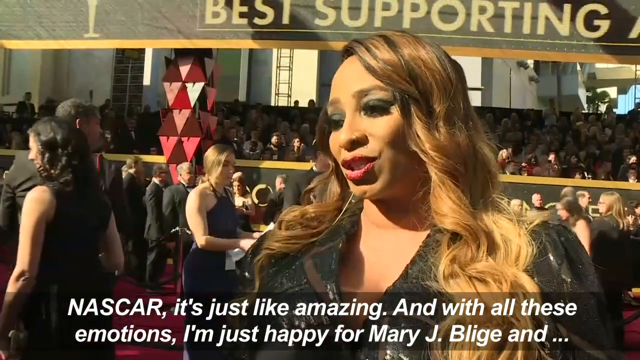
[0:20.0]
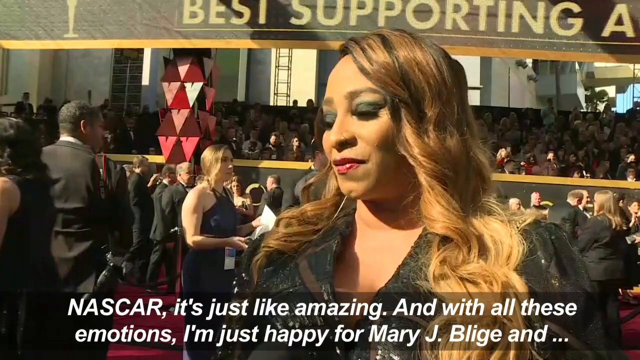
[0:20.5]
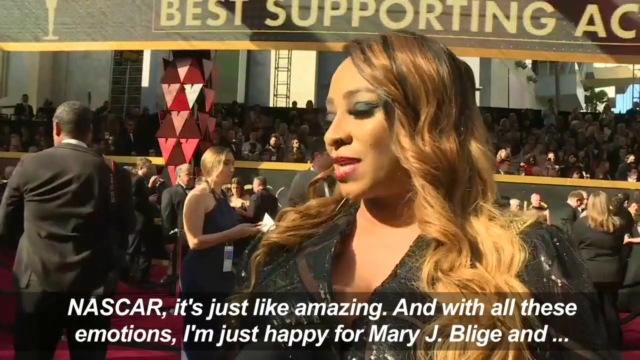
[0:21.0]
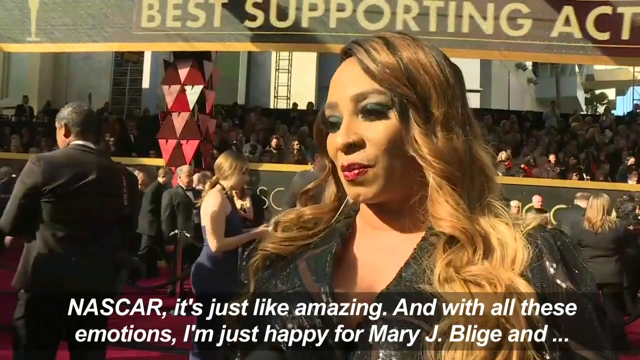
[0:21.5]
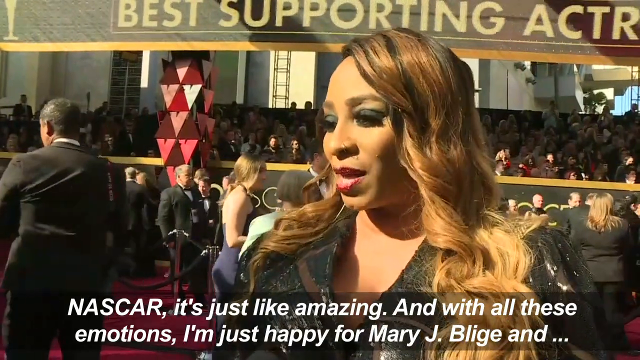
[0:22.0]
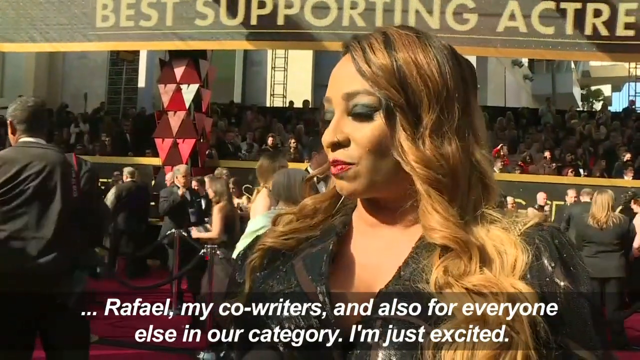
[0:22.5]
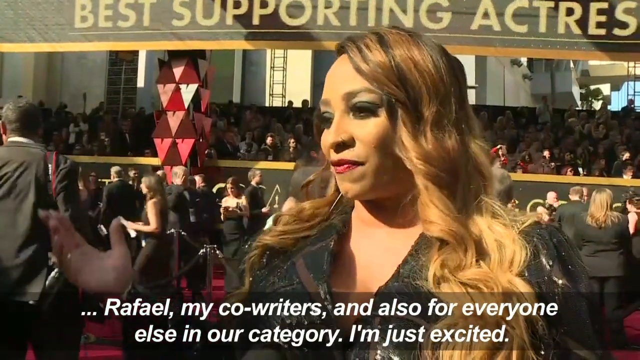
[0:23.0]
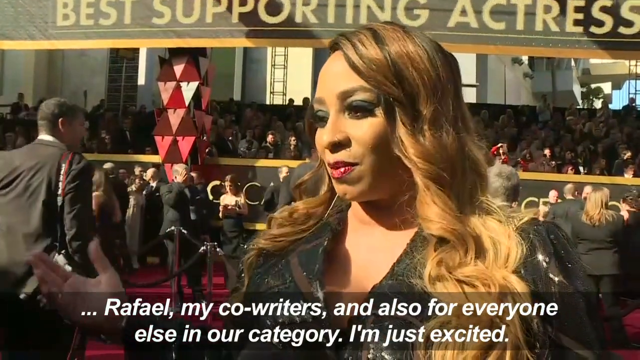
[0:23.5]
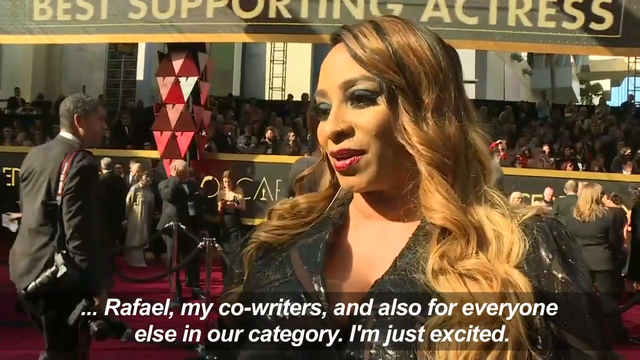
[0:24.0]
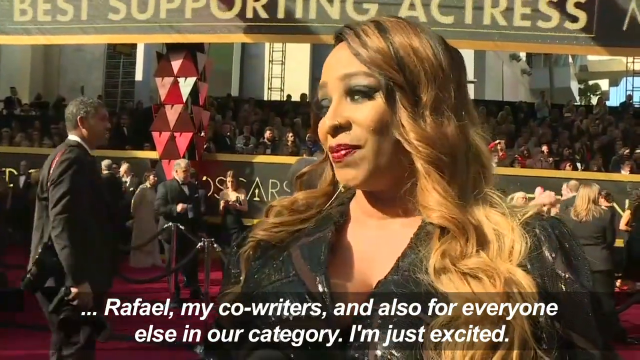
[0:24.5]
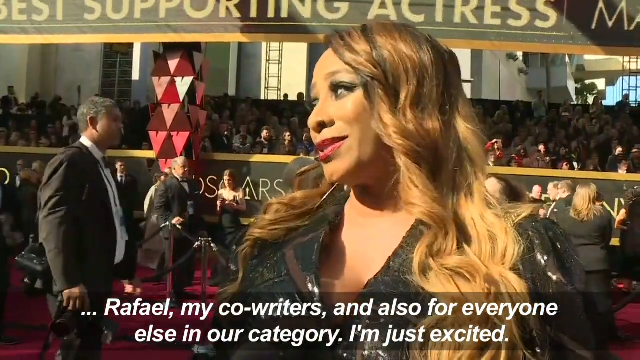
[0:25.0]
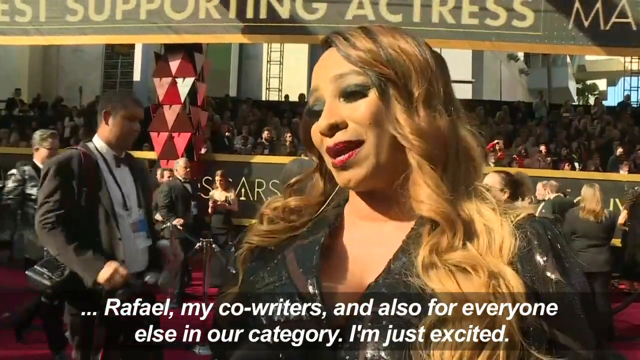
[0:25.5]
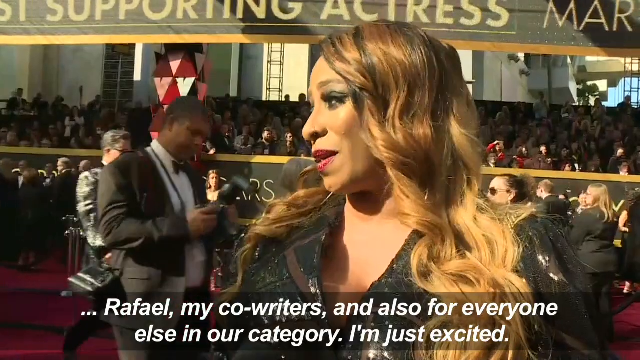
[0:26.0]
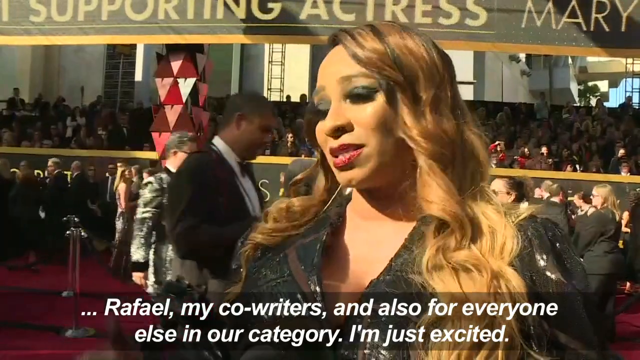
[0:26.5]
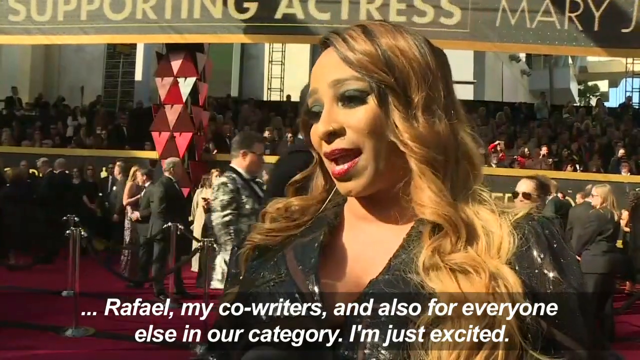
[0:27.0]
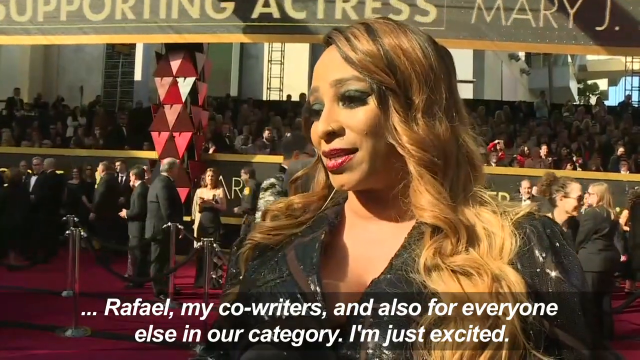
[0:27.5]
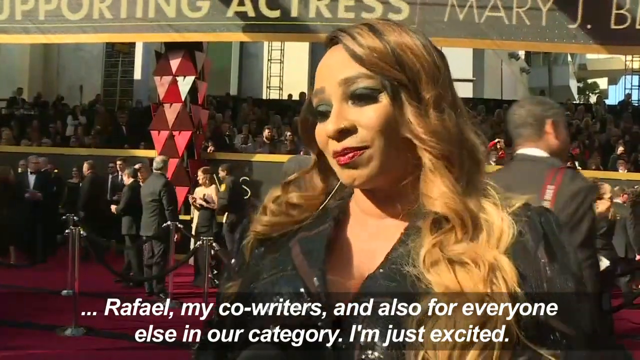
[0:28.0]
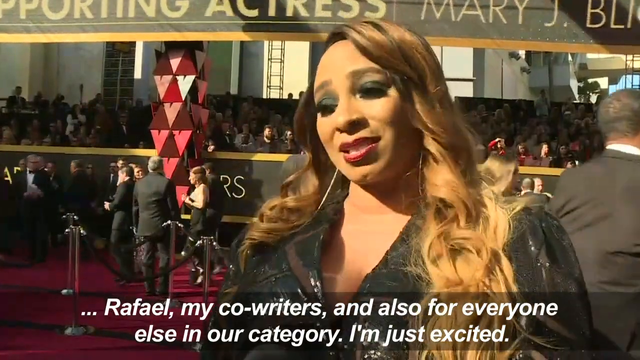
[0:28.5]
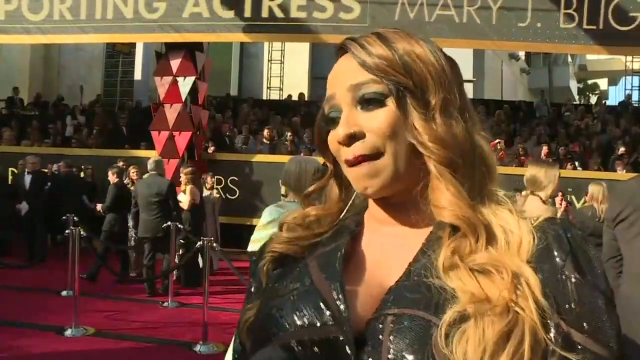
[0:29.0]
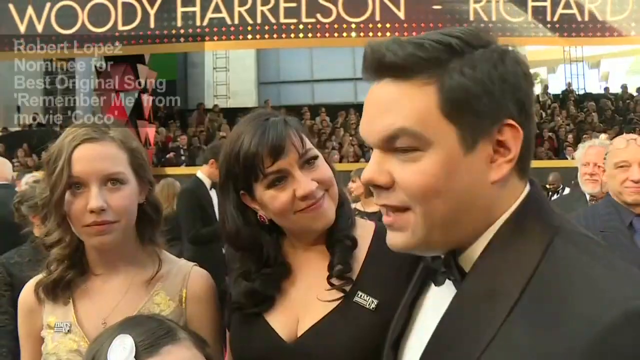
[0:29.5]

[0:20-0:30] The woman continues talking. On a closer look she appears to be between about 30 and 45 years old. Behind her are many people wearing mainly black, so the colour scheme appears to be black, and some sort of red thing hangs behind her. On the screen text reads "supporting actress". On the left side there is a Black man holding a camera. Her words appear on the screen, including "Raphael my co-writers" and "I am just excited". She keeps talking while people move up and down in the background.